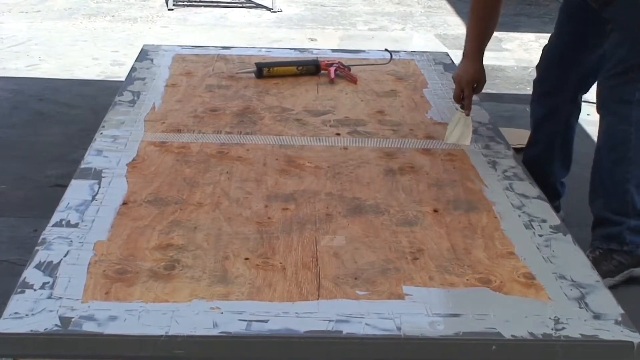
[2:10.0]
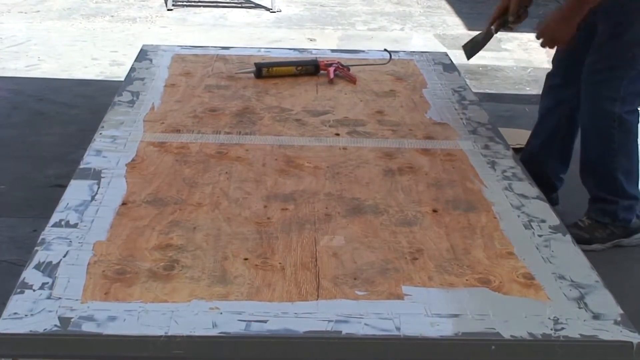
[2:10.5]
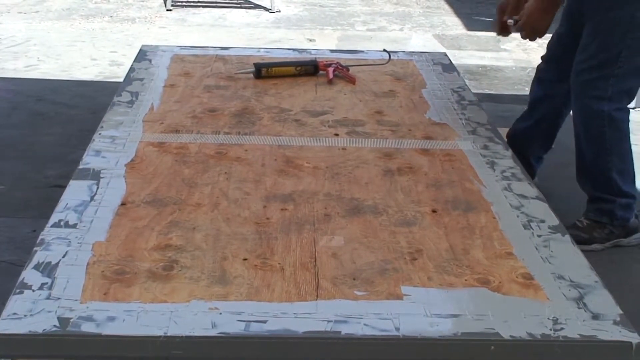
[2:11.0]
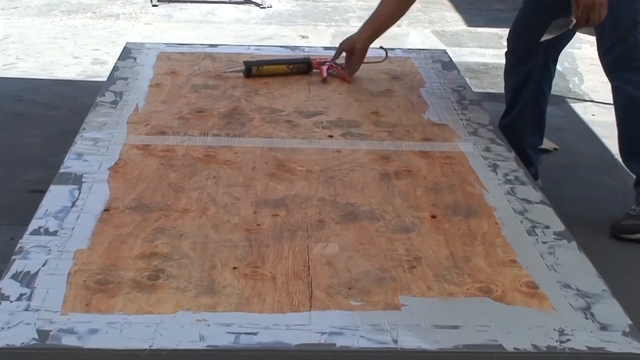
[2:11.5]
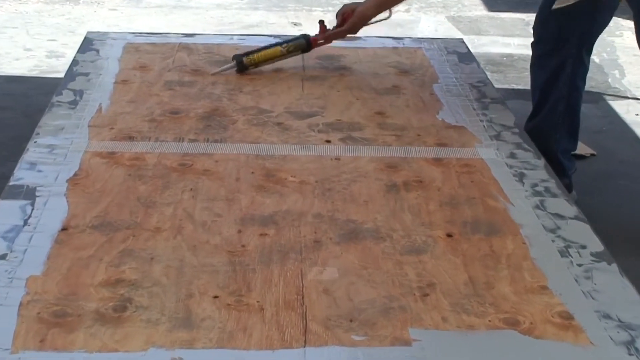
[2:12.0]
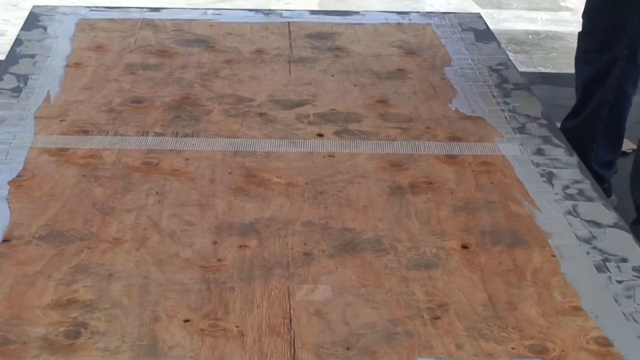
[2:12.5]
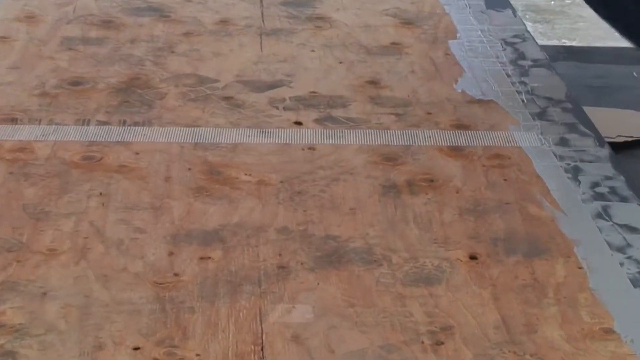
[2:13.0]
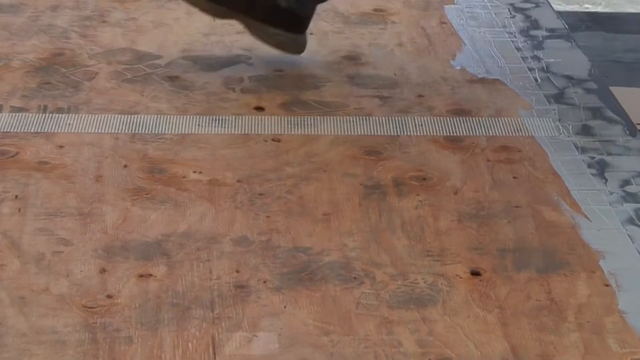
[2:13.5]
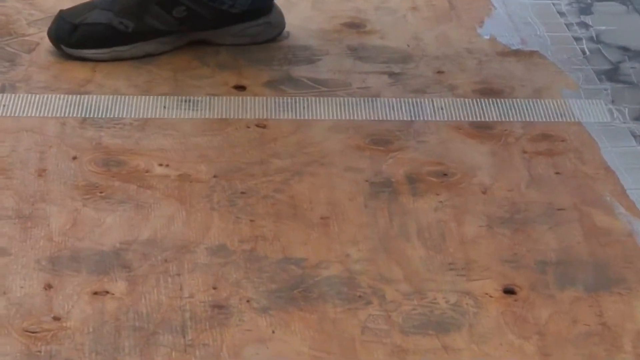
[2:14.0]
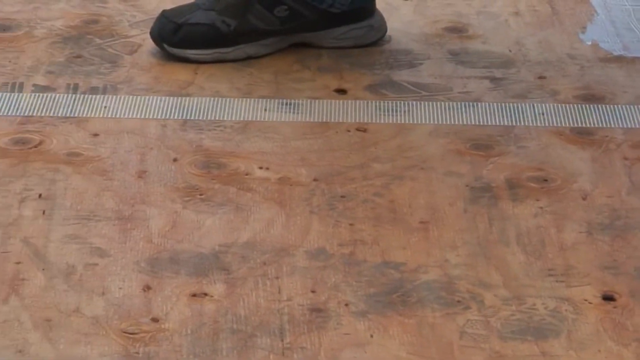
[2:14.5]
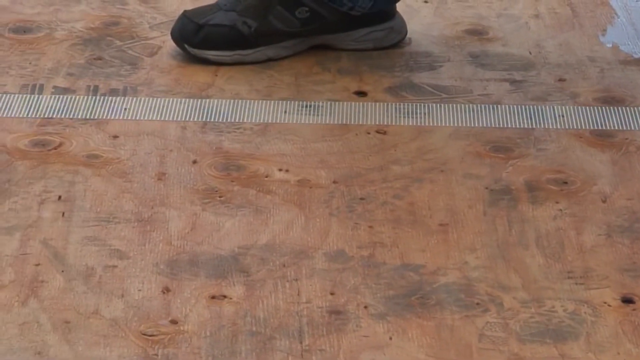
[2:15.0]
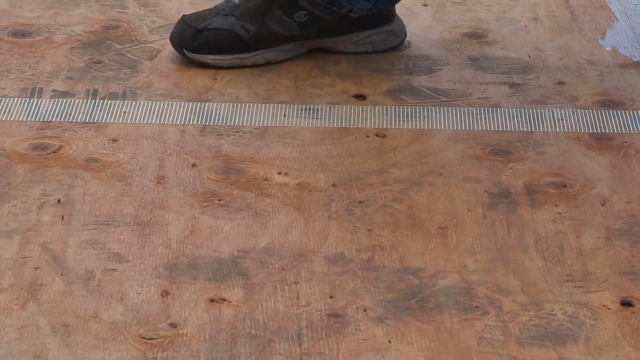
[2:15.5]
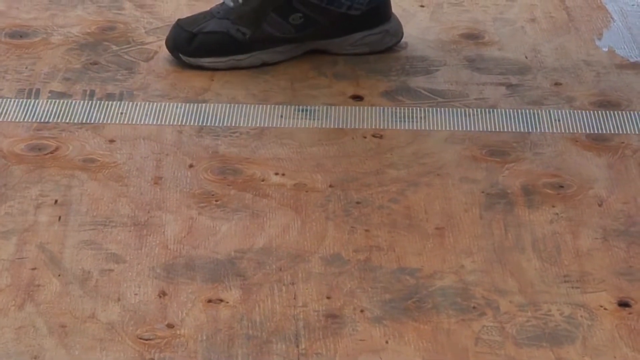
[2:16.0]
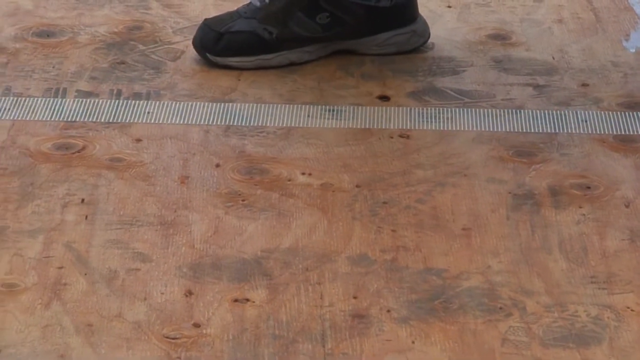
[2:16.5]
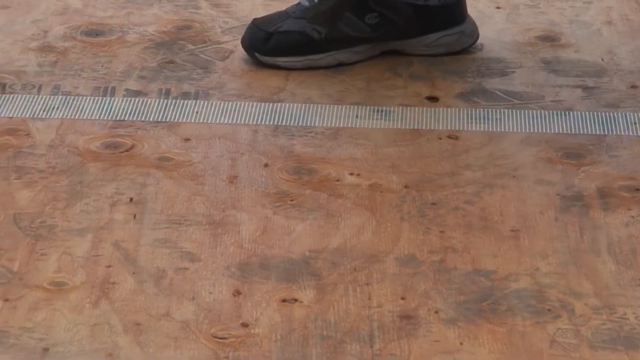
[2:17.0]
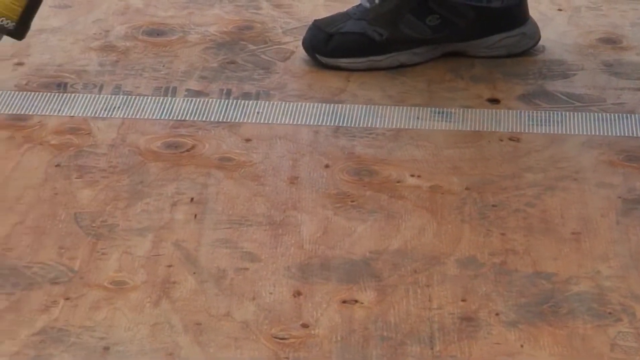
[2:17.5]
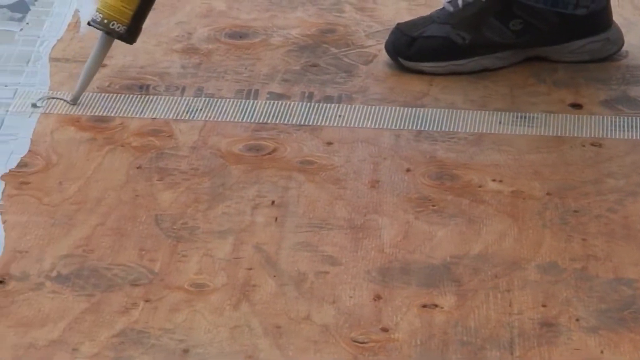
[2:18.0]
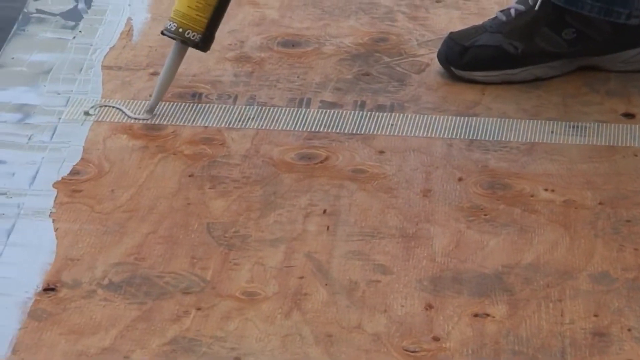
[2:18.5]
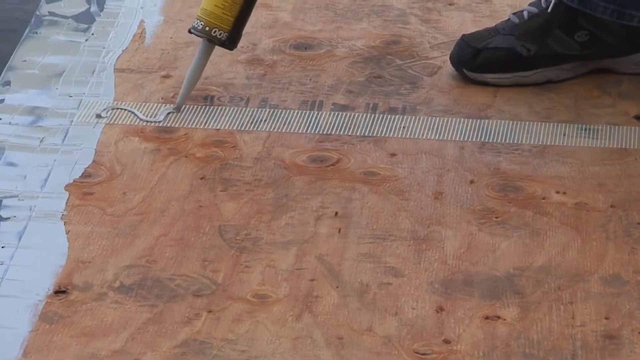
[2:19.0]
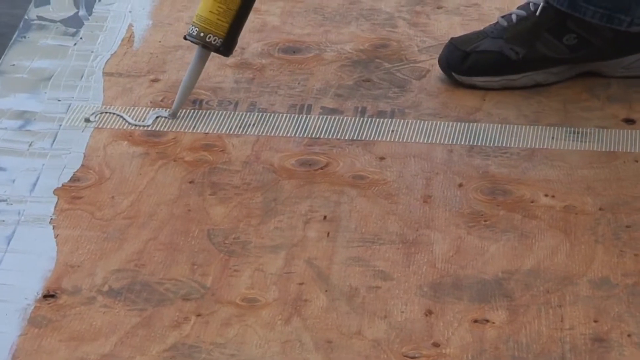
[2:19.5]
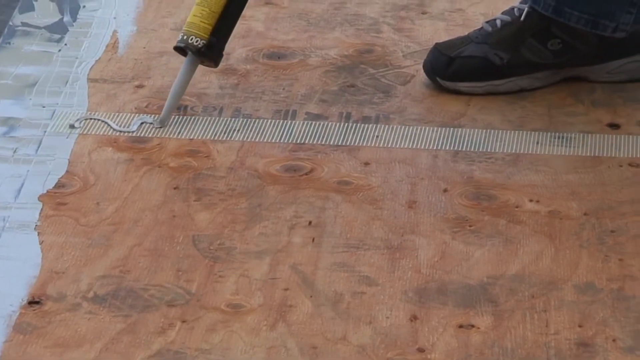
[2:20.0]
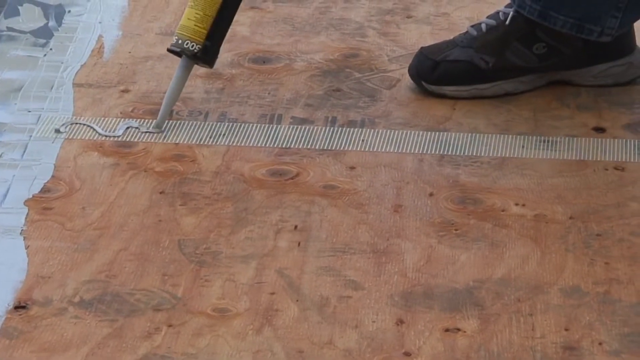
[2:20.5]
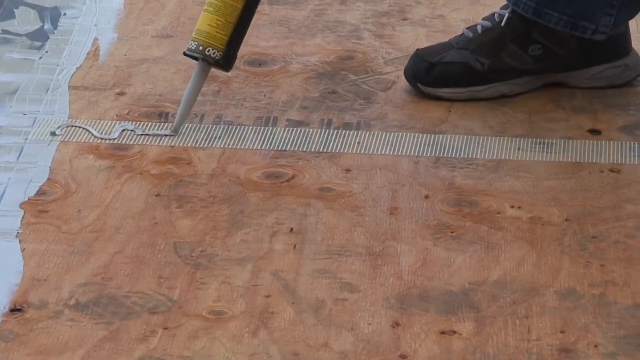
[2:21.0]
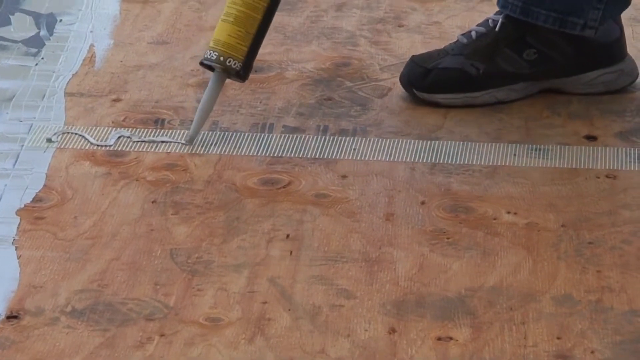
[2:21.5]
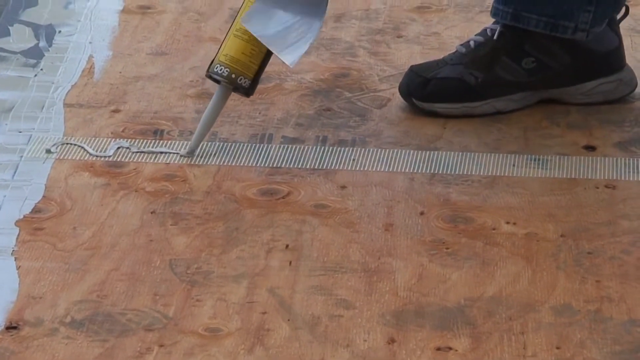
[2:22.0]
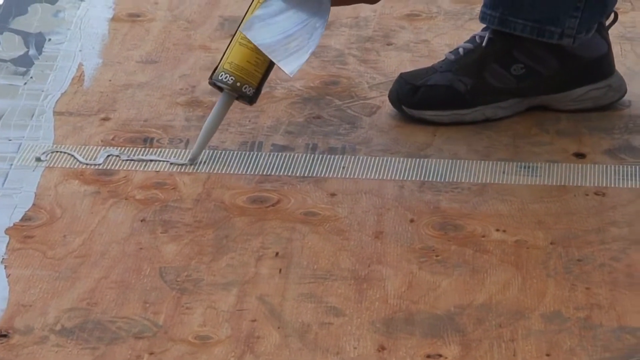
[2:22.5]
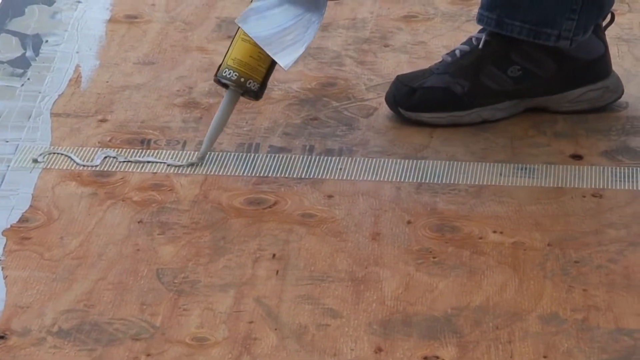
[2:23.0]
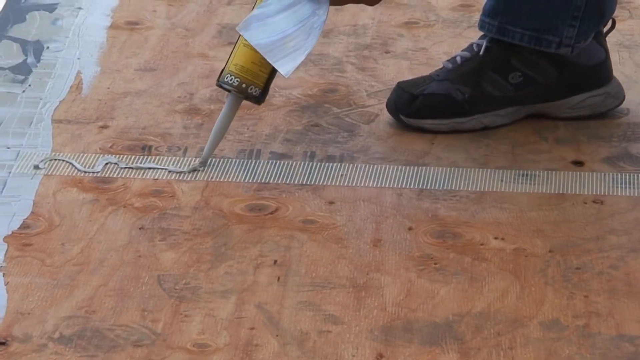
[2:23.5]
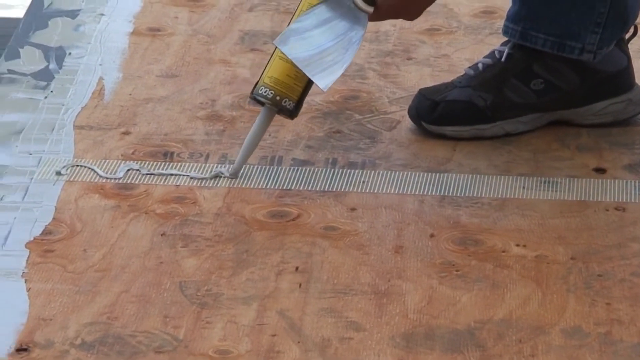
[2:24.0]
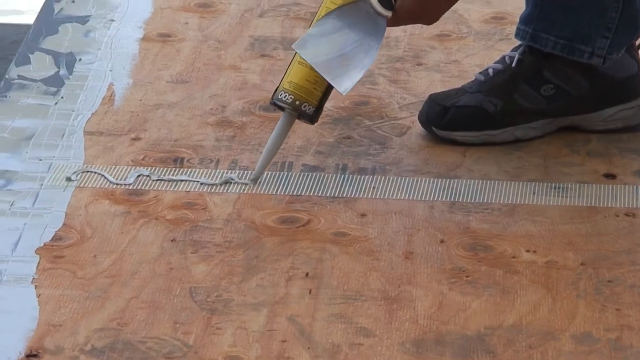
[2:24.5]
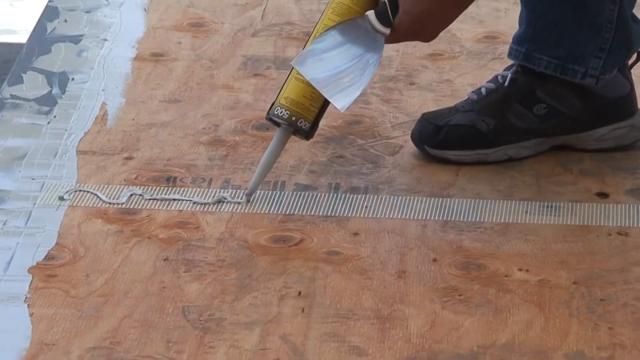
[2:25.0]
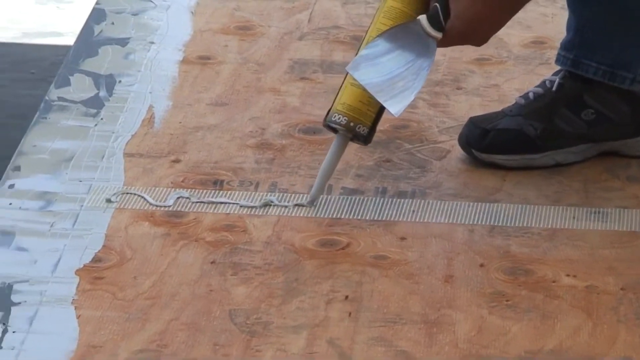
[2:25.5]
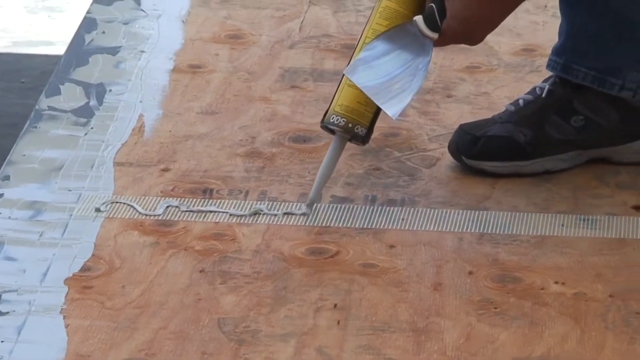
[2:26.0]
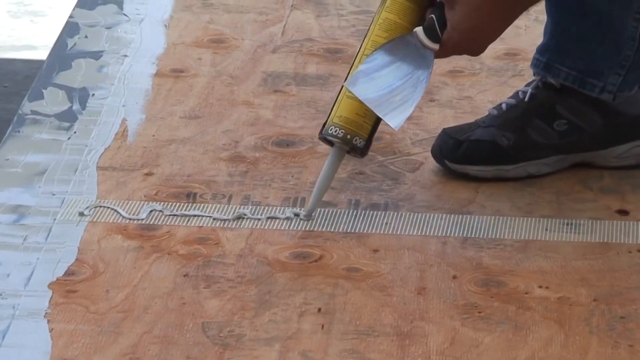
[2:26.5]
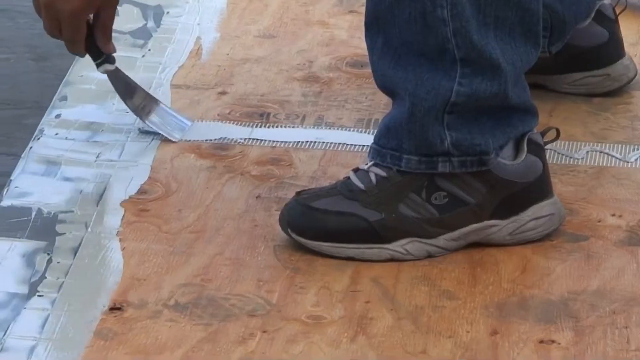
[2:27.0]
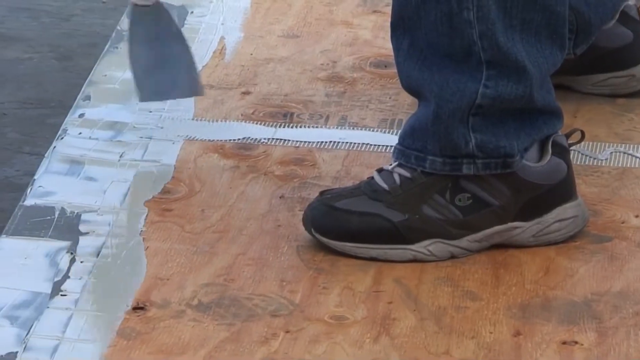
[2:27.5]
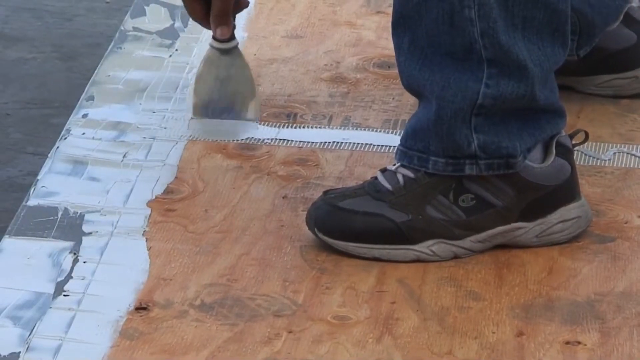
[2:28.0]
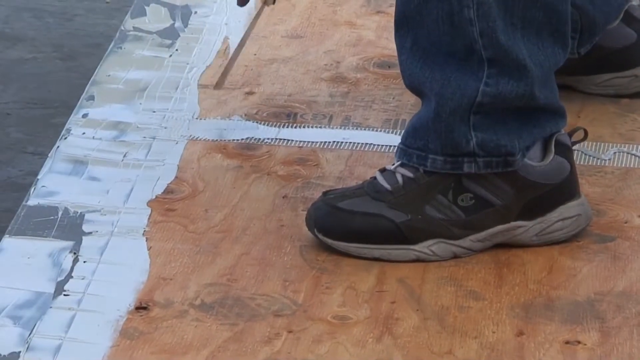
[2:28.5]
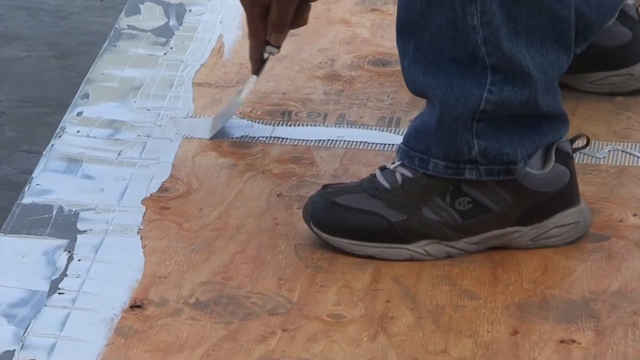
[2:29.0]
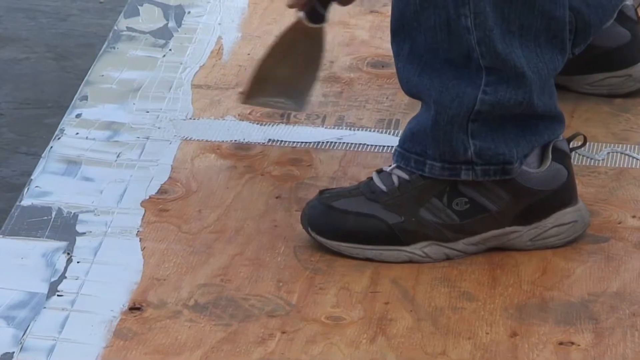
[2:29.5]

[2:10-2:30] The camera zooms in on the horizontal area, which looks like reinforcement tape or some kind of tape rather than the adhesive. His right trainer is visible. He puts more adhesive down with his syringe in a squiggly pattern, not in a straight line, about half a mil thick. He straddles the line with his trainers, showing his left trainer and the lower ankle part of his jeans, and uses the spatula to spread over the horizontal part of the decking. The camera zooms in to the right, pans toward the middle, then toward the left, and zooms in on the part where he places the adhesive onto the tape covering the board. He then uses the spatula to spread it out evenly along the surface, creating a thin layer over the deck.